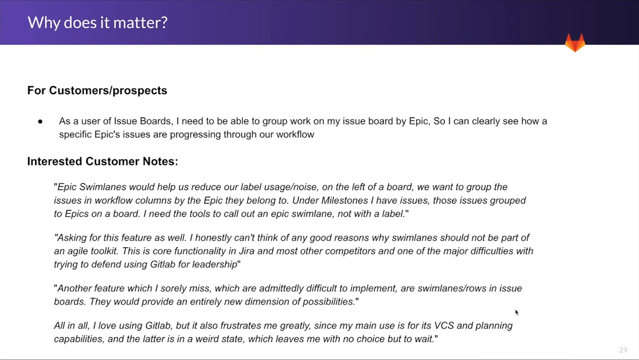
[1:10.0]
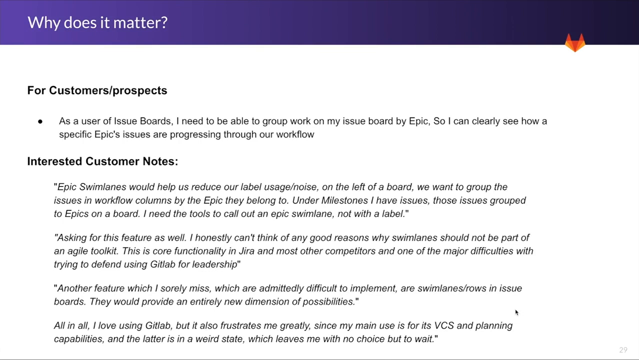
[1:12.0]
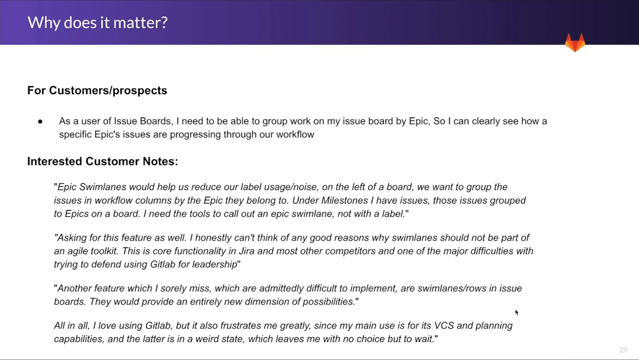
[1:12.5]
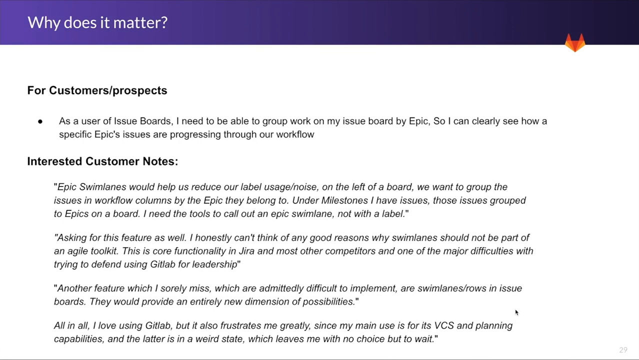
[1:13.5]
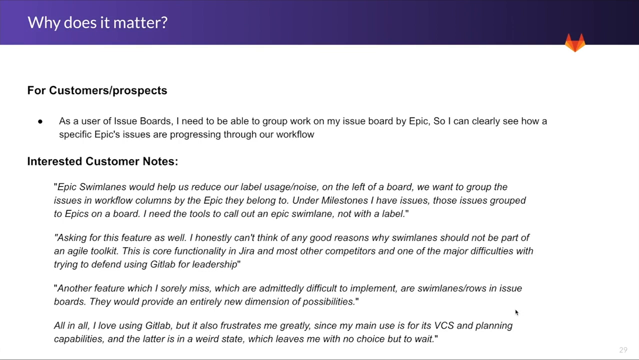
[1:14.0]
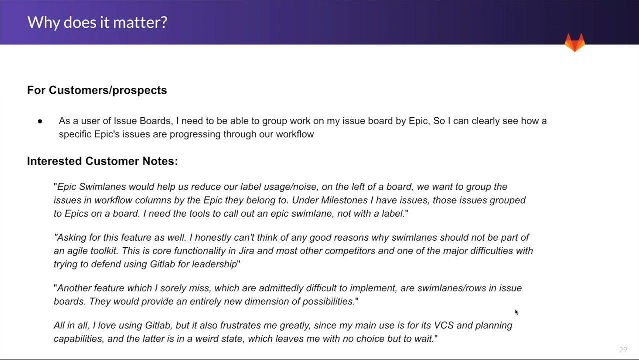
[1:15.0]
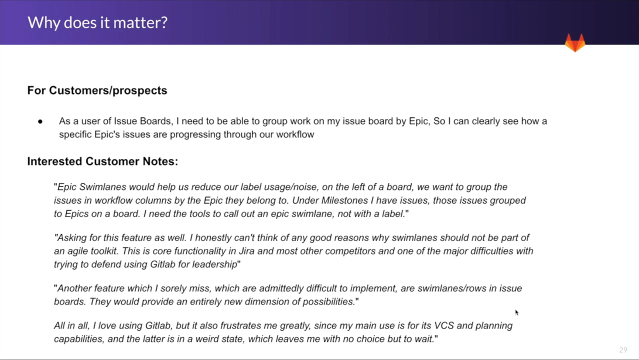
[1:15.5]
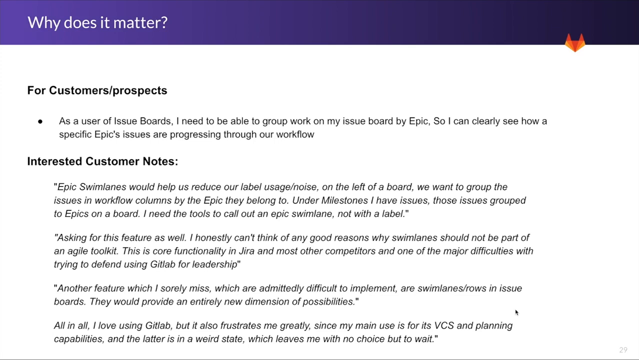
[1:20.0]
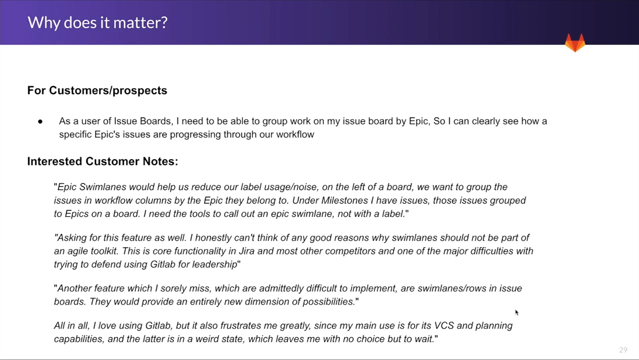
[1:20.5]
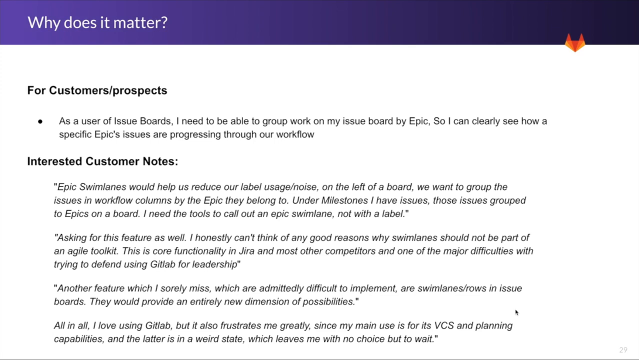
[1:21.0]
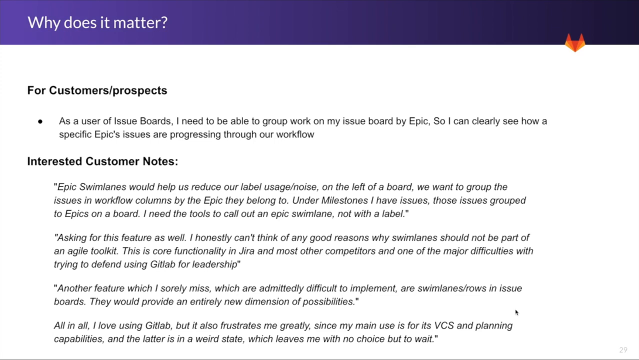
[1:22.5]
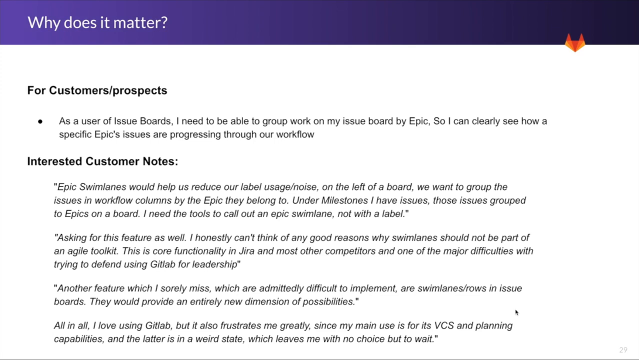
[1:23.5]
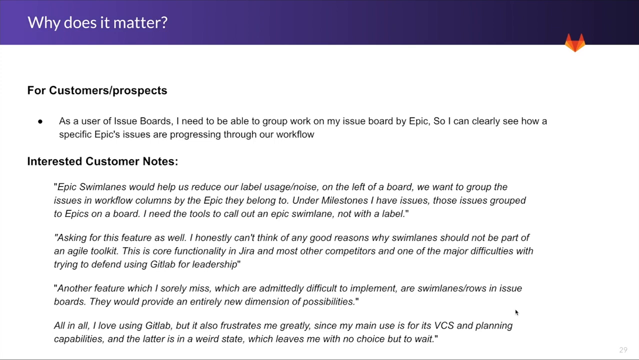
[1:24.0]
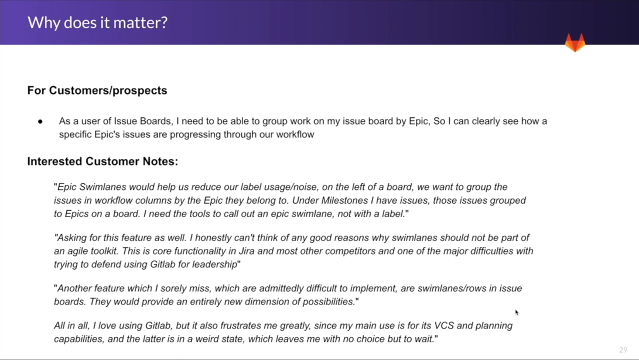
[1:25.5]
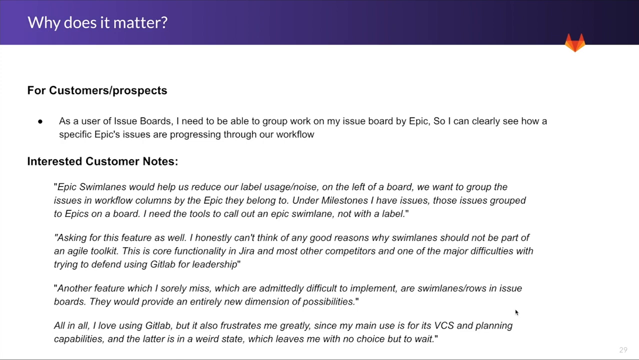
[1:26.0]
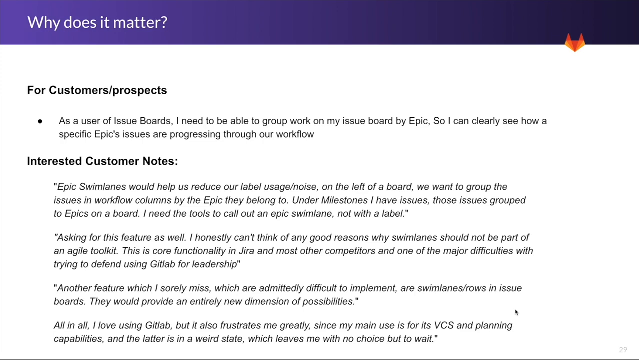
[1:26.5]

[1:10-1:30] A section contains several bullet points, one of them under a heading titled "why does it matter?", shown in white text over purple at the very top of the screen. It reads "for customers / prospects, as a user of issue boards, I need to be able to group work on my issue board by epic so I can clearly see how a specific epic's issues are progressing through our workflow." Under an interested customer notes section, it reads "Epic swim lanes would help us reduce our label usage / noise." Further notes say "On the left of a board, we want to group the issues in workflow columns by the epic they belong to" and "I honestly can't think of any good reasons why swim lanes should not be a part of my Agile toolkit."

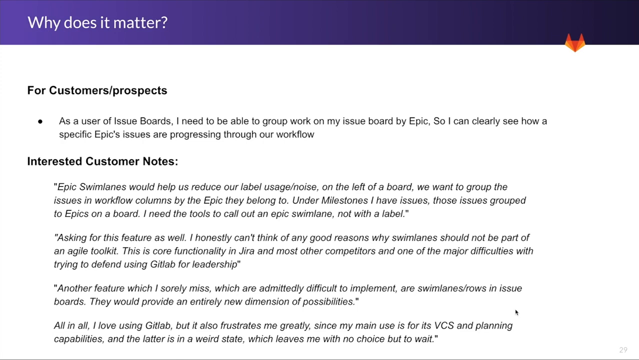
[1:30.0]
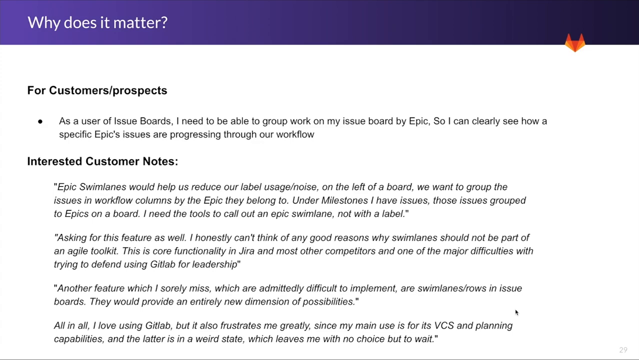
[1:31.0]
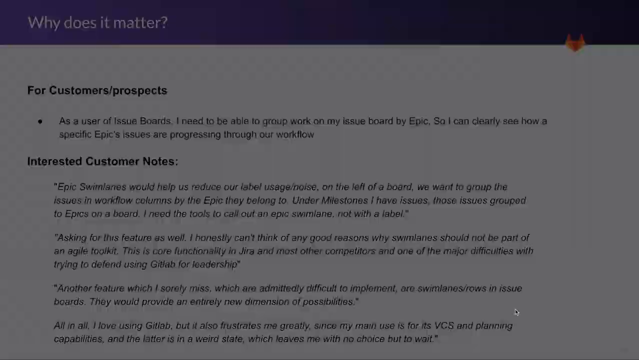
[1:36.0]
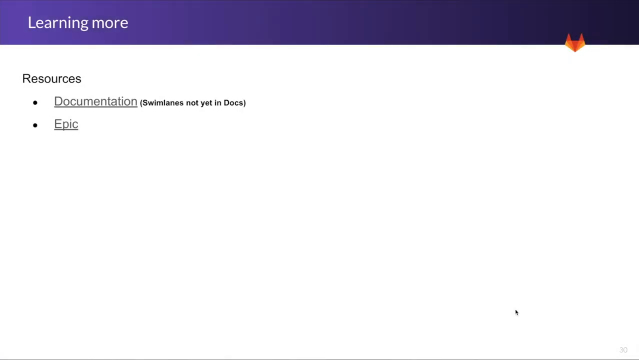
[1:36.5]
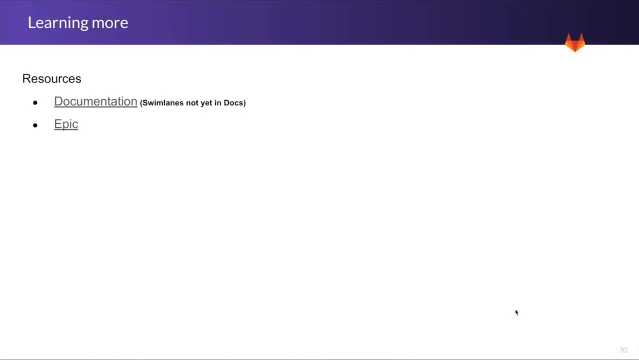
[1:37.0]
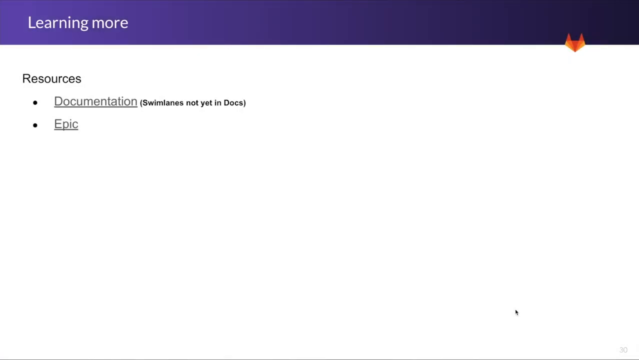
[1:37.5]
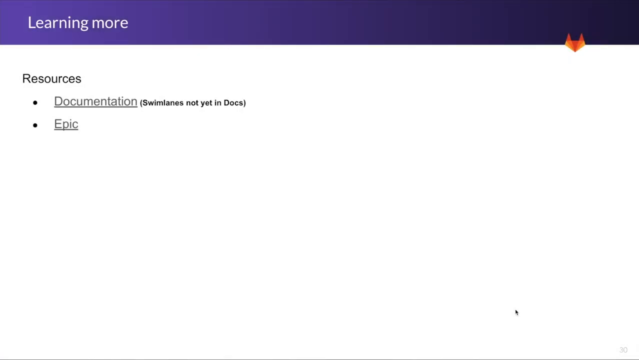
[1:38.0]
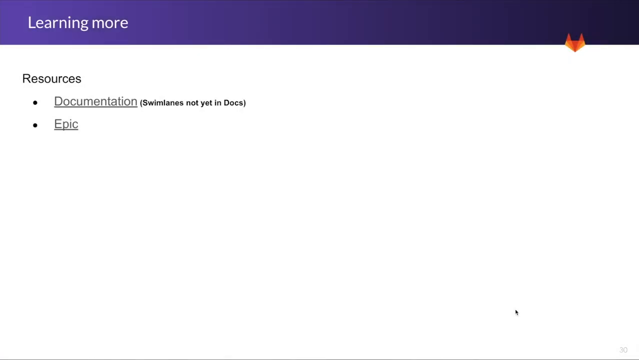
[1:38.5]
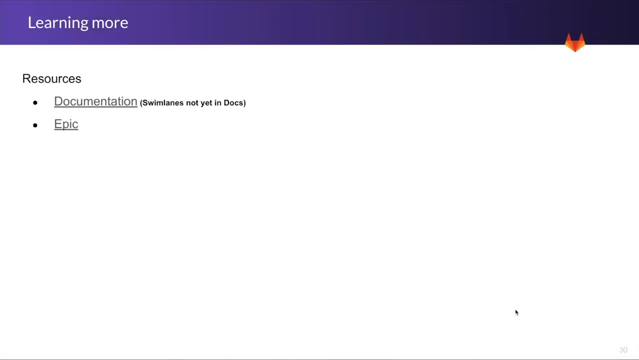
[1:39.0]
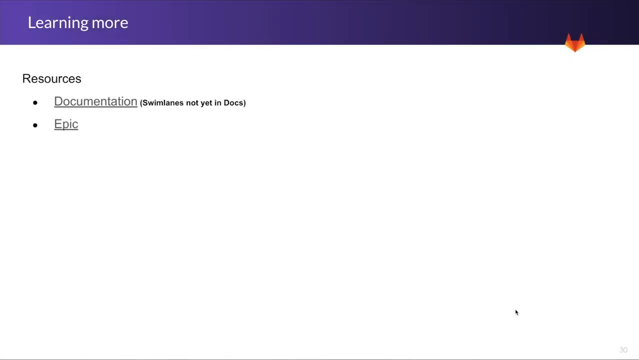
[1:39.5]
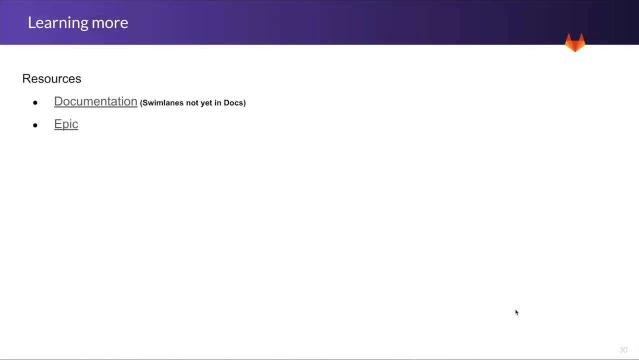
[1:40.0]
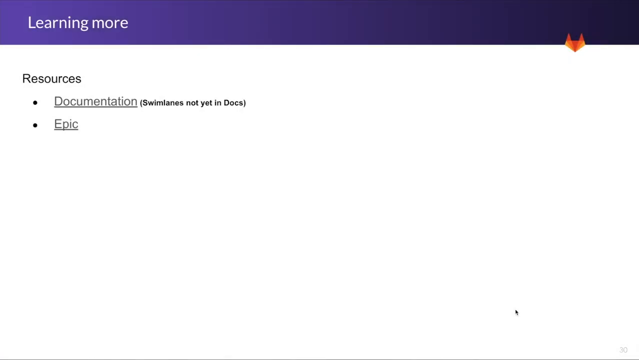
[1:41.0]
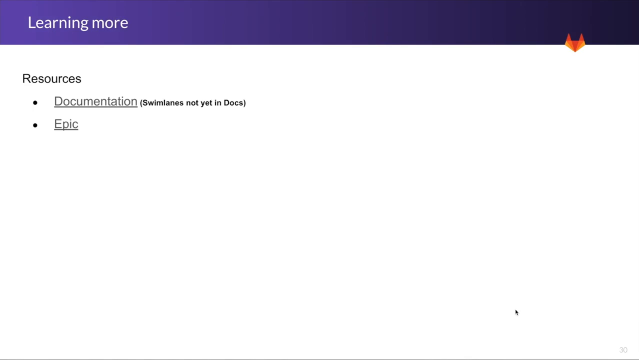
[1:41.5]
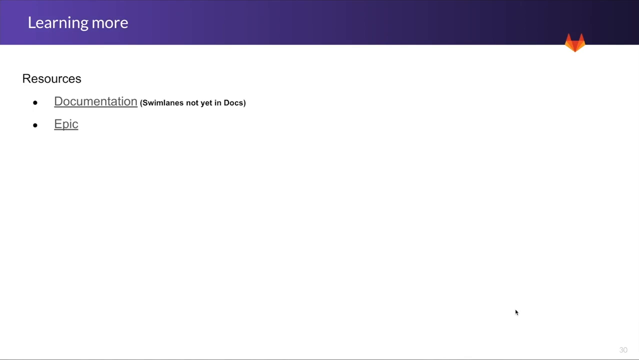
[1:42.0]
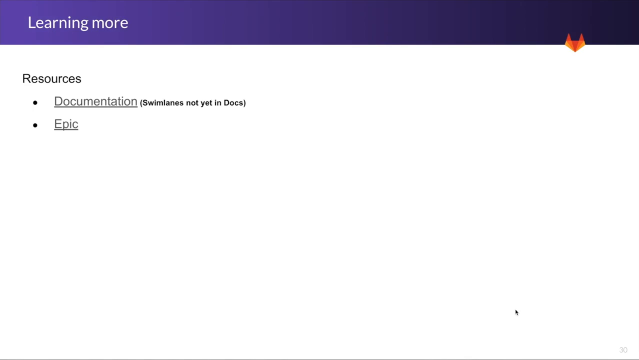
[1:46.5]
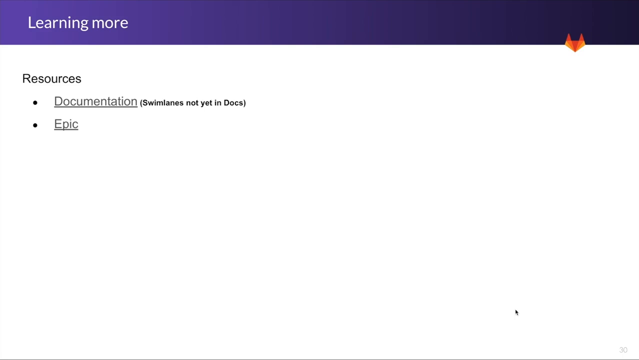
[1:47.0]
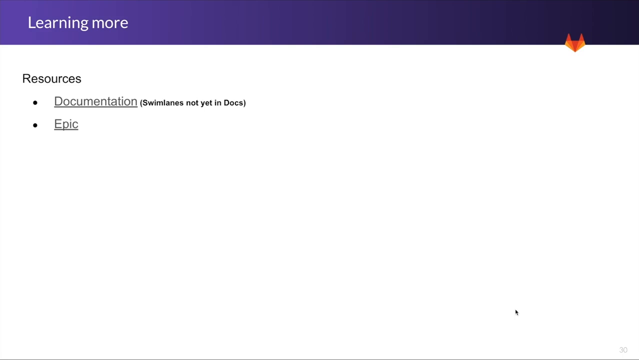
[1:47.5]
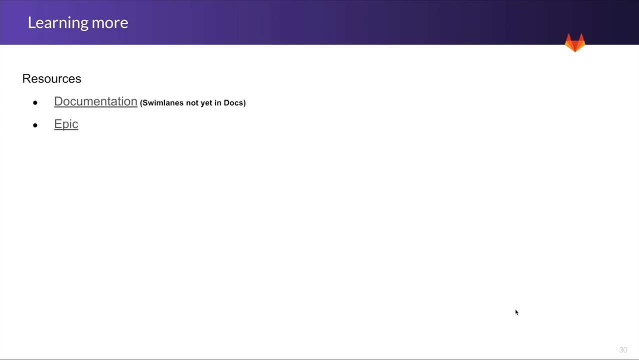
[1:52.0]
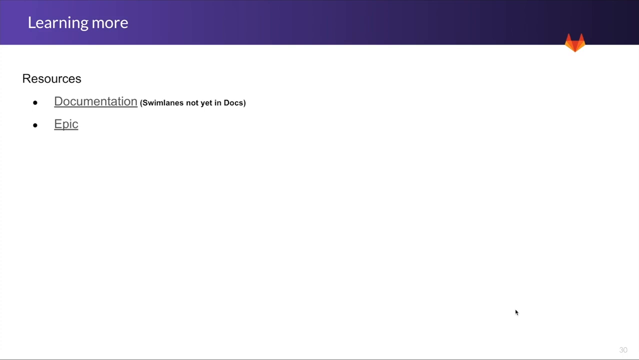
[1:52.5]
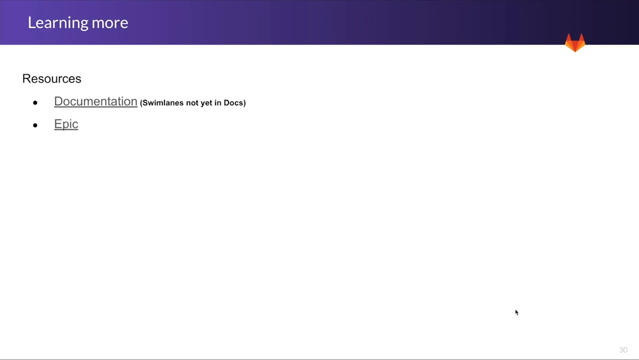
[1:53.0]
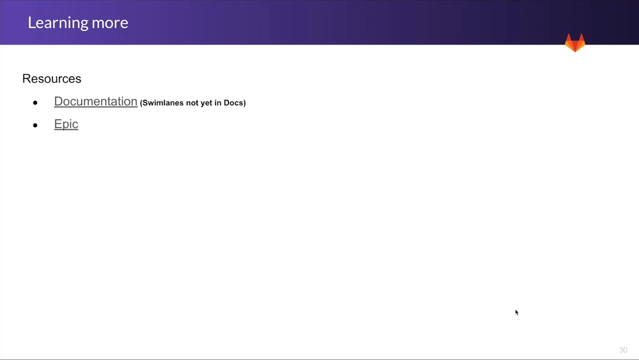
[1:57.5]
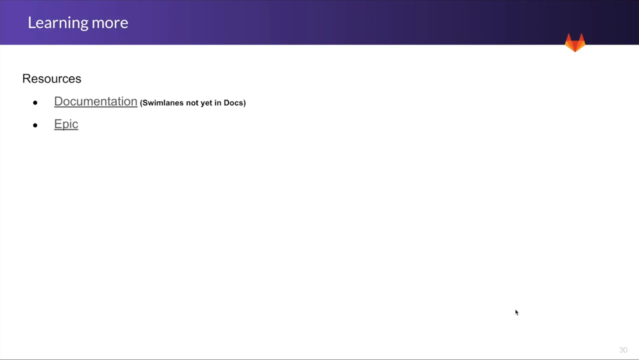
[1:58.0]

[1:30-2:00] The "why does it matter?" section is on screen, with the text about being a user of issue boards who needs to see how a specific epic's issues are progressing through the workflow, and a note that epic swim lanes would help reduce label usage / noise. Further text reads "I honestly can't think of any good reasons why swim lanes should not be part of" a toolkit, "This is core functionality in JIRA and most other competitors", and a note that one of the major difficulties was trying to defend using GitLab for leadership. Another note mentions a feature the writer sort of misses, swim lane scrolls in issue boards, ending "I think it would provide an entirely new dimension of possibilities."